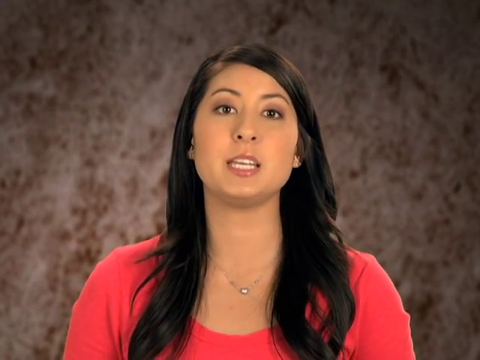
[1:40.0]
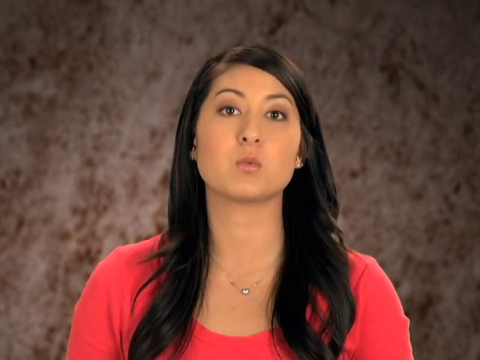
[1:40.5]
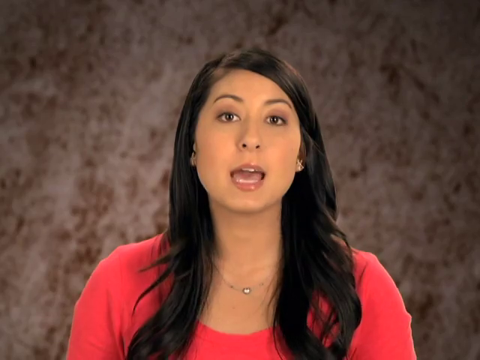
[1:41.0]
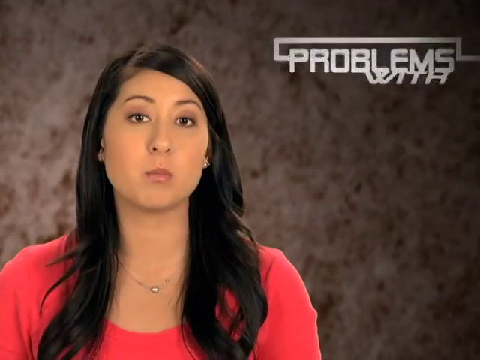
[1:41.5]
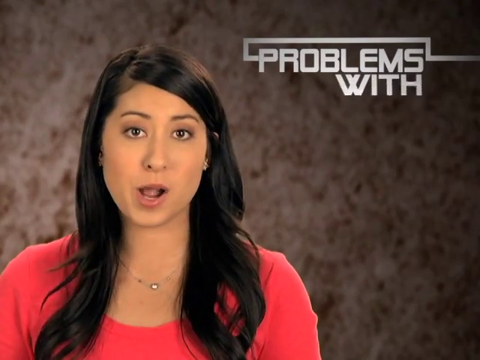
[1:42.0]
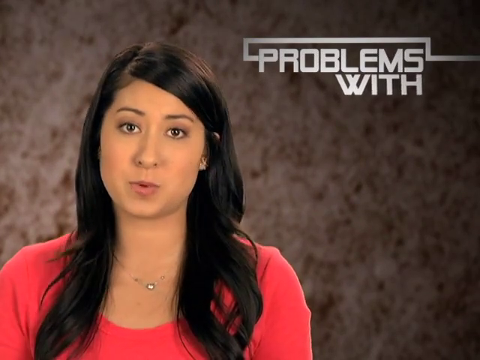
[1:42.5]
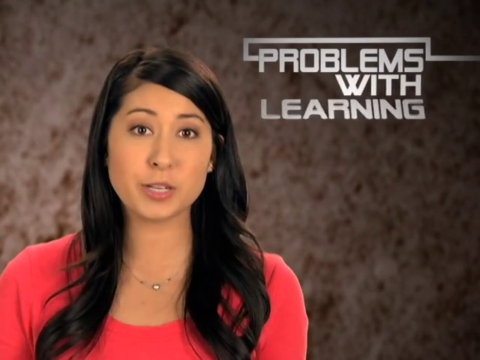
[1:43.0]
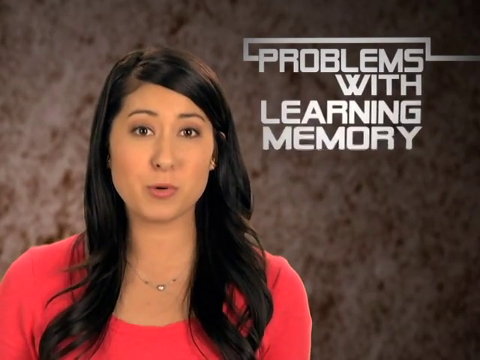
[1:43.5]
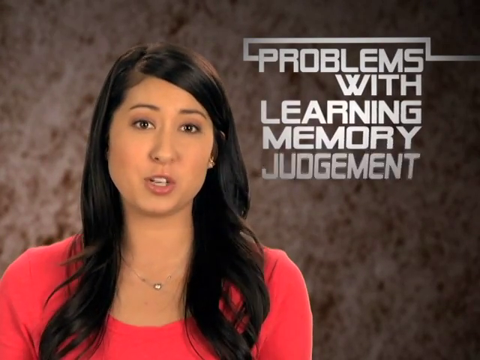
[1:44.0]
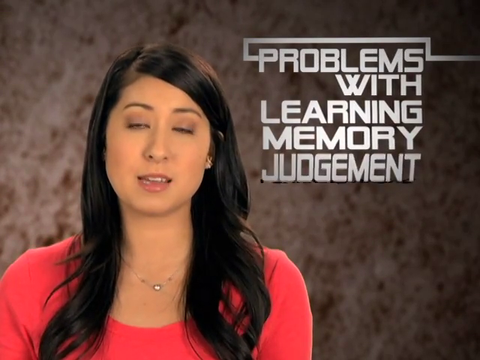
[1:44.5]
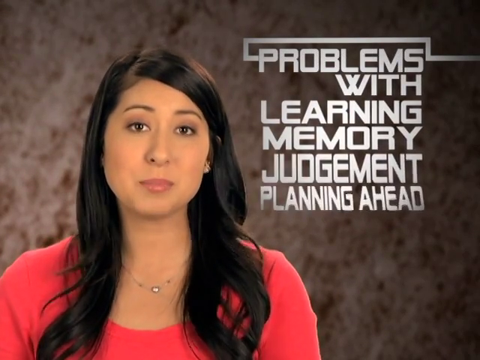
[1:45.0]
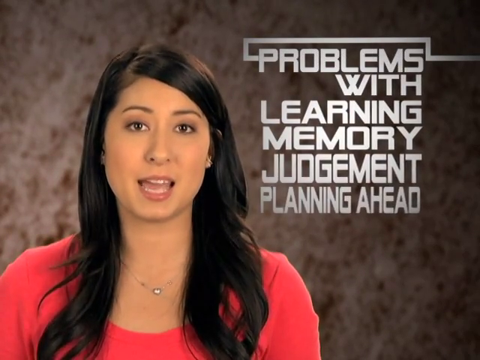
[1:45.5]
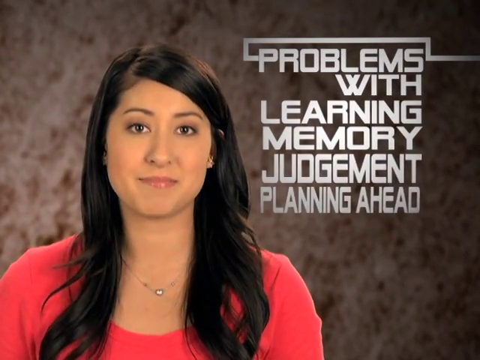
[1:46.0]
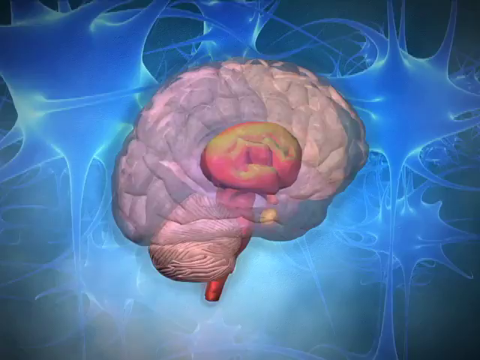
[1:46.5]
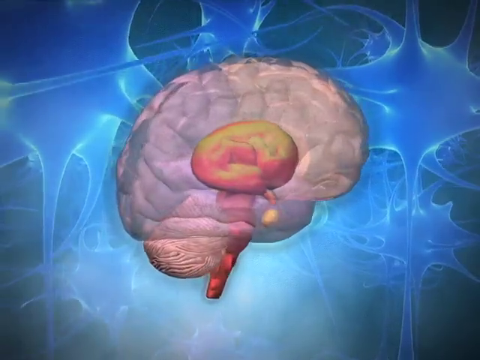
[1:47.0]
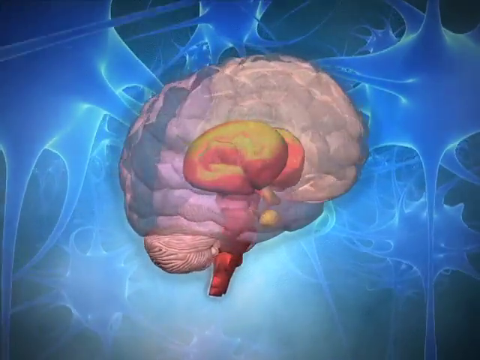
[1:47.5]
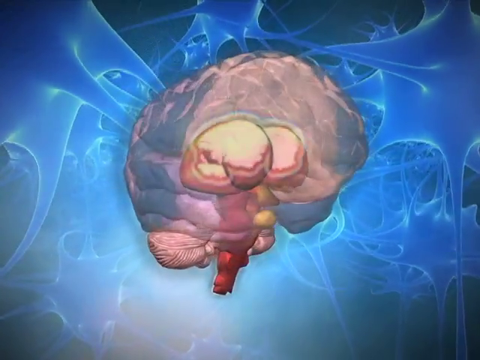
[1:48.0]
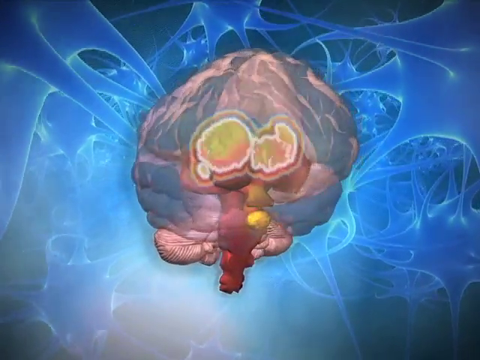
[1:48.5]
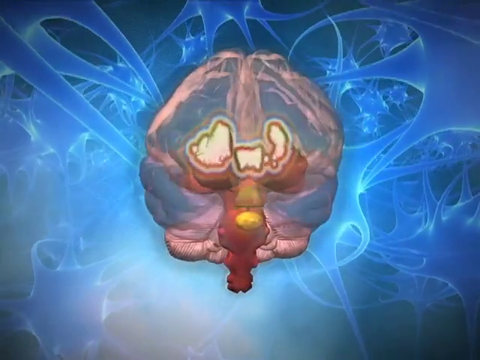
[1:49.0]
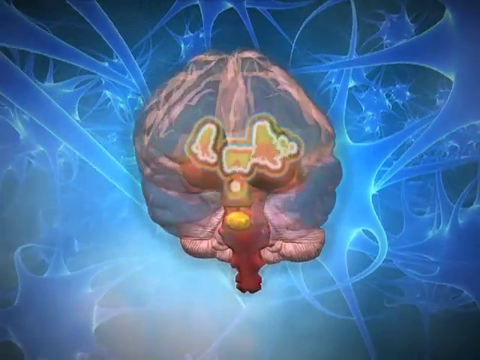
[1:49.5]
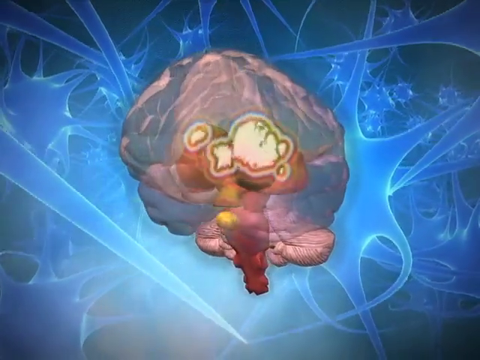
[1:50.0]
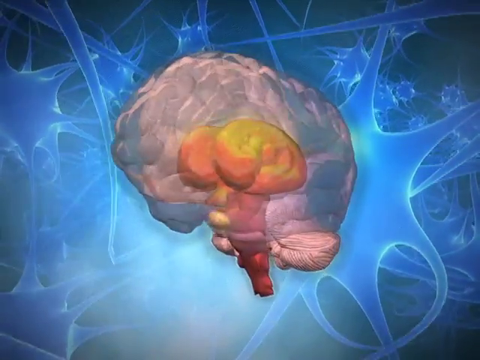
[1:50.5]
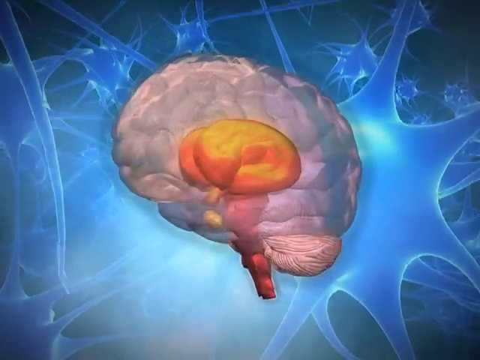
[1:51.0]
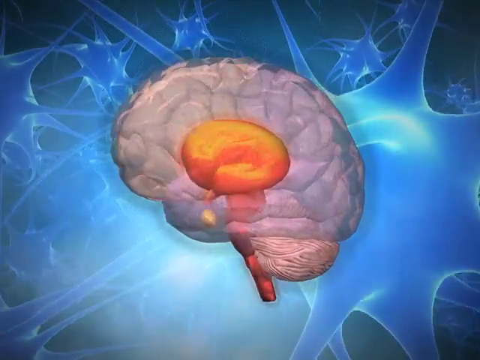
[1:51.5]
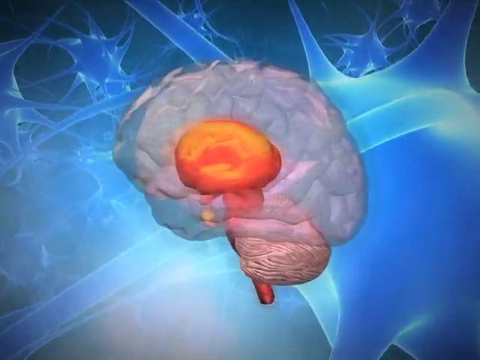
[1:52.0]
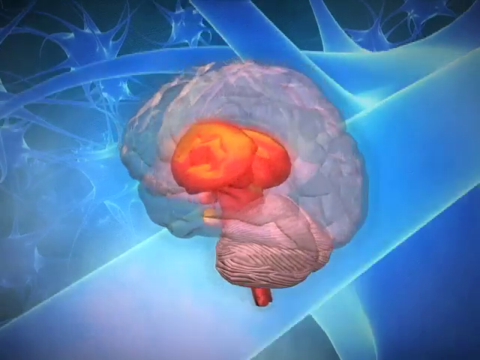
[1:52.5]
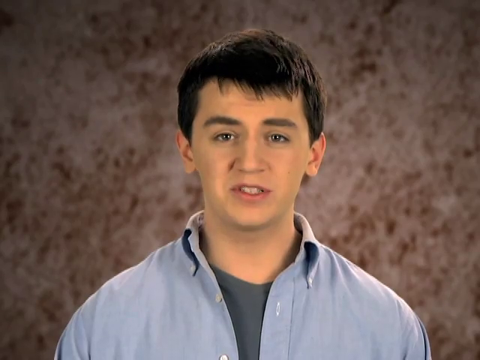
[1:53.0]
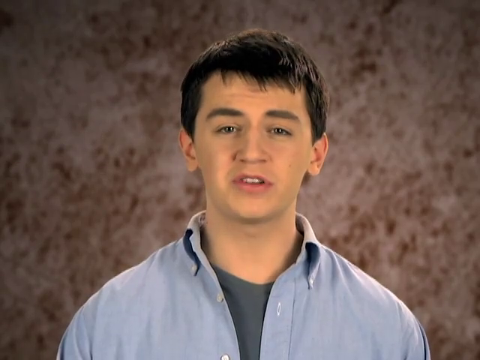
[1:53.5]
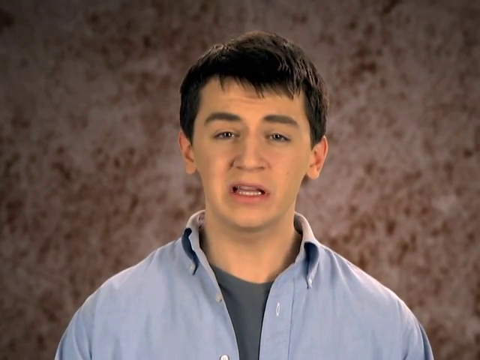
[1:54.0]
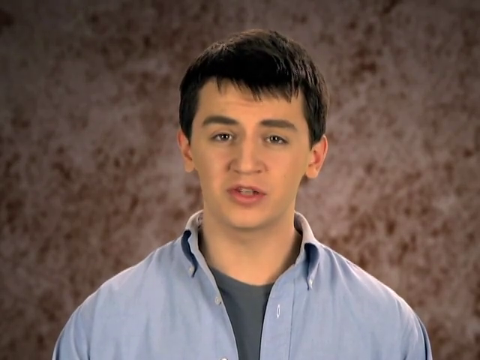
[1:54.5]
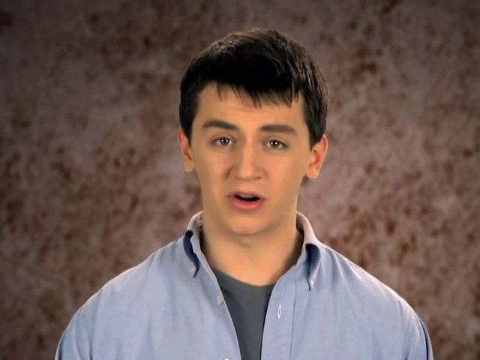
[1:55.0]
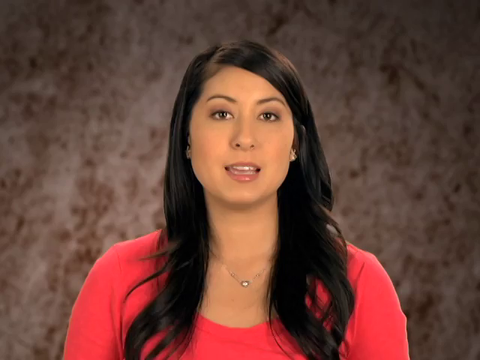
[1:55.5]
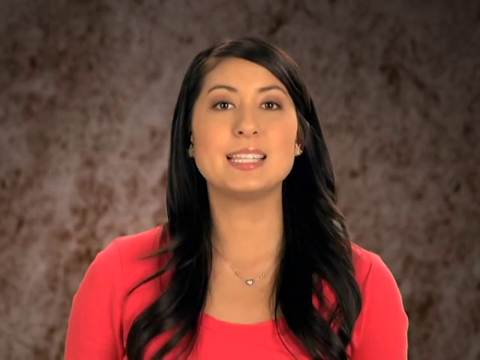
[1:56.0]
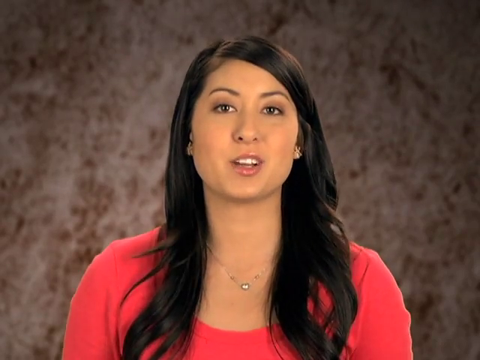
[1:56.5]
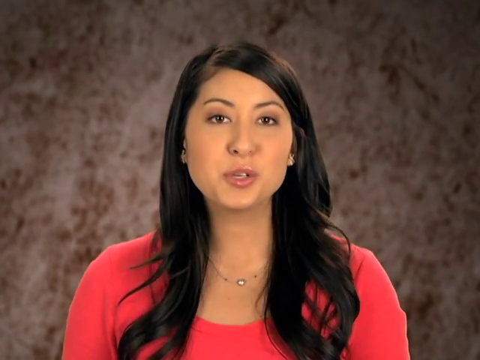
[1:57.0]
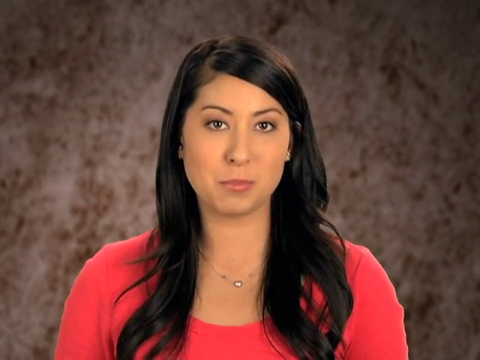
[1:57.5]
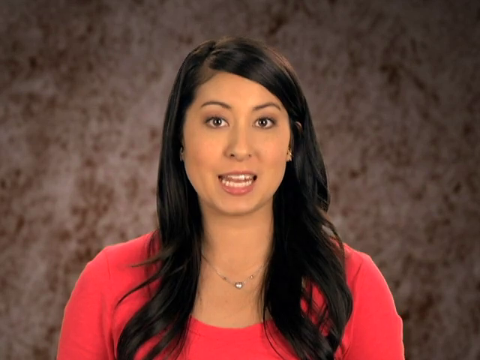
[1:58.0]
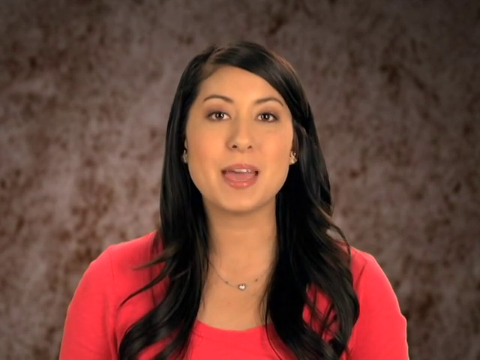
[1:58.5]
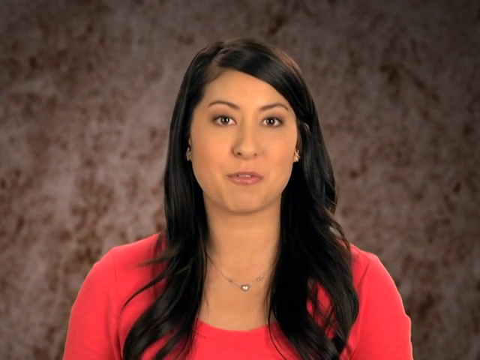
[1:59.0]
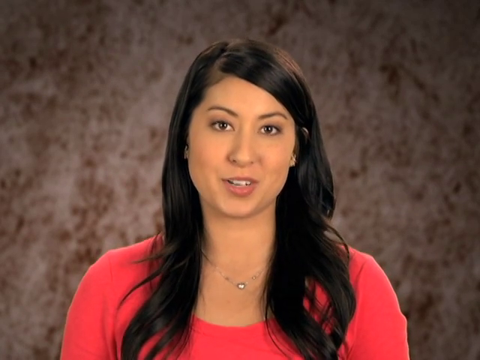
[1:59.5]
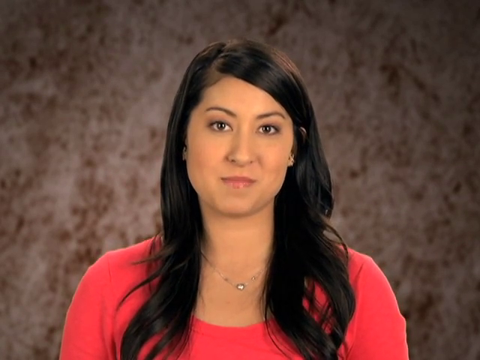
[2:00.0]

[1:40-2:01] A woman with dark brown-black hair, darker tan skin and large brown eyes, wearing a peach blouse and a delicate necklace, speaks directly to the camera. In her upper right corner, light gray text reads "problems with learning, memory, judgment, planning ahead". The view then pans to an image of a brain on the right side, spinning around. The brain is pink, with regions connected to the brainstem lit up in a darker pink, surrounded in the background by light blue neuron imagery; the brain makes a complete spin. It then pans to a Caucasian man in his young 20s with short brown hair and brown eyes, wearing a dark gray t-shirt and a light gray button-up shirt, who speaks directly to the camera, before panning back to the girl, who speaks directly to the camera and smiles. The background for both of them is a splotchy off-white and reddish brown with no specific pattern.